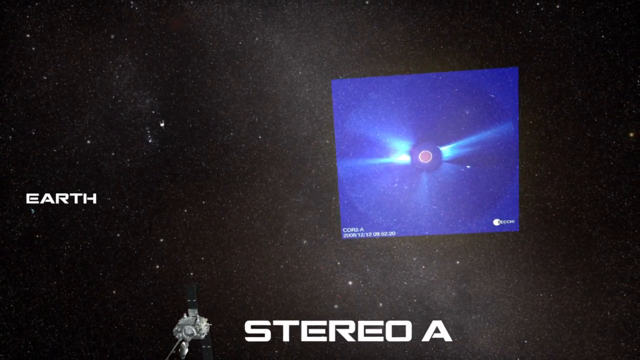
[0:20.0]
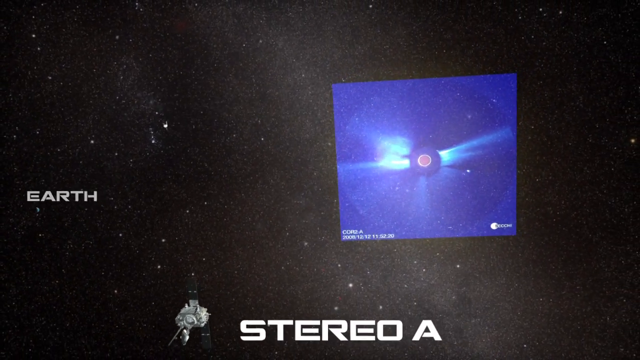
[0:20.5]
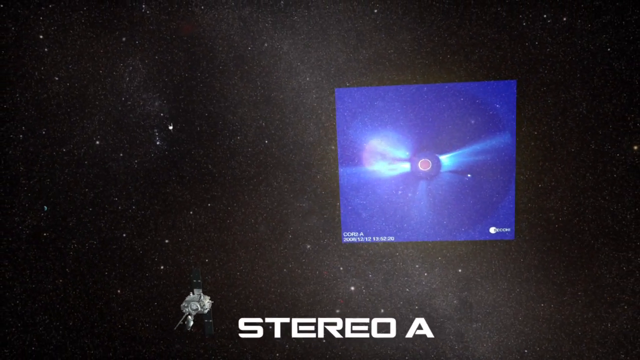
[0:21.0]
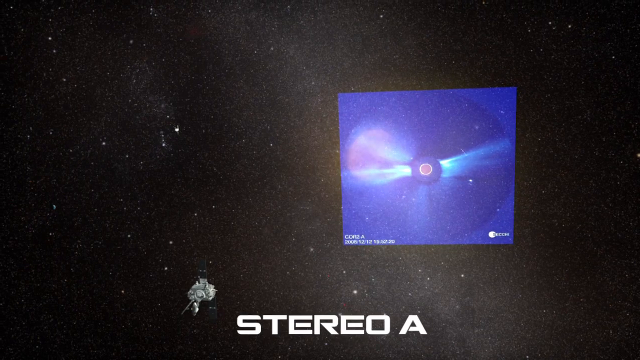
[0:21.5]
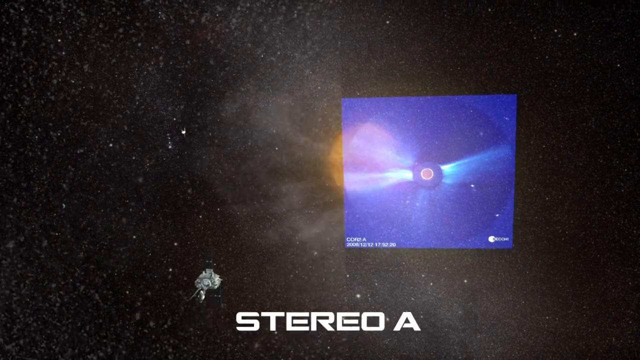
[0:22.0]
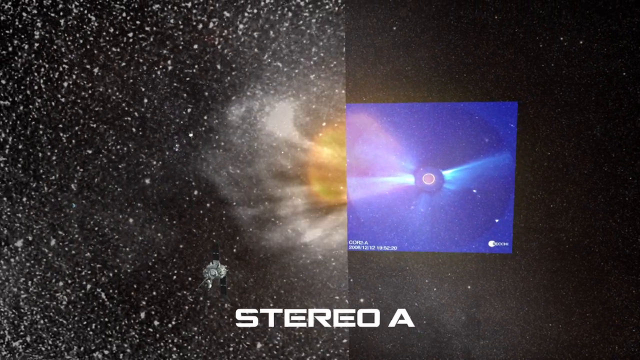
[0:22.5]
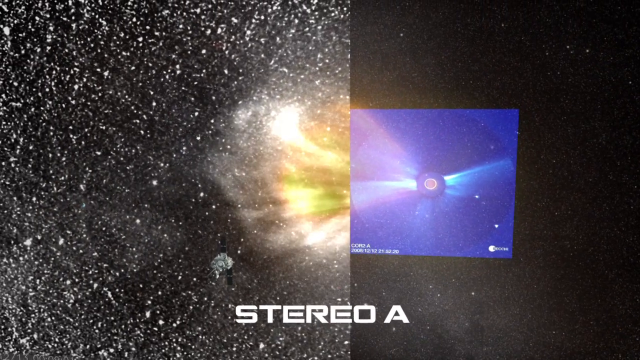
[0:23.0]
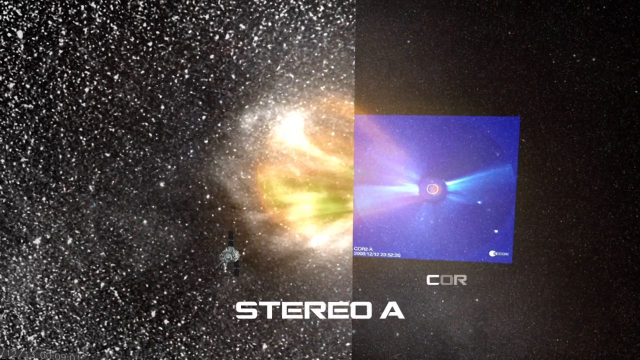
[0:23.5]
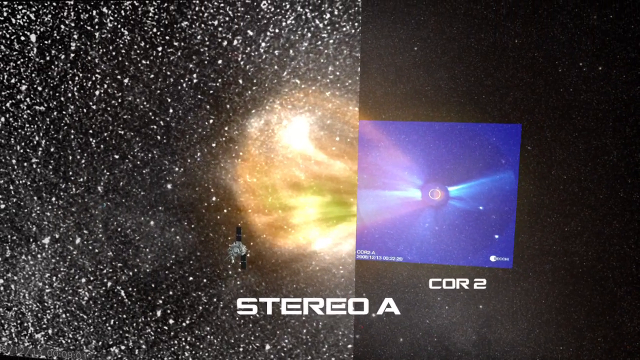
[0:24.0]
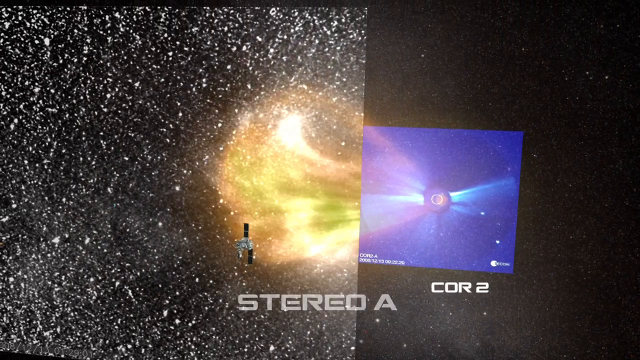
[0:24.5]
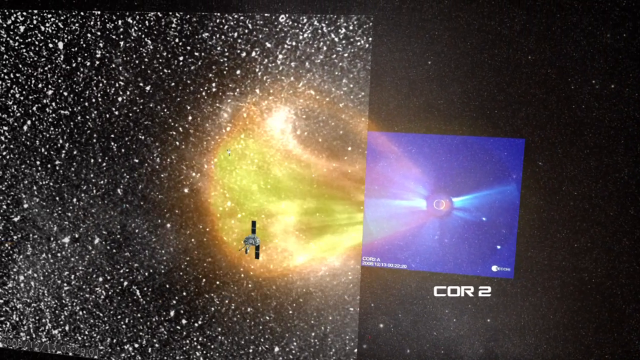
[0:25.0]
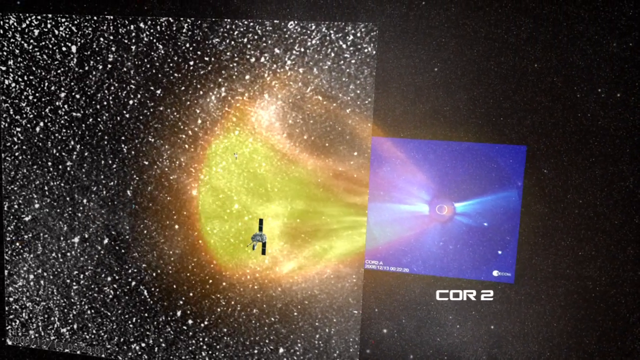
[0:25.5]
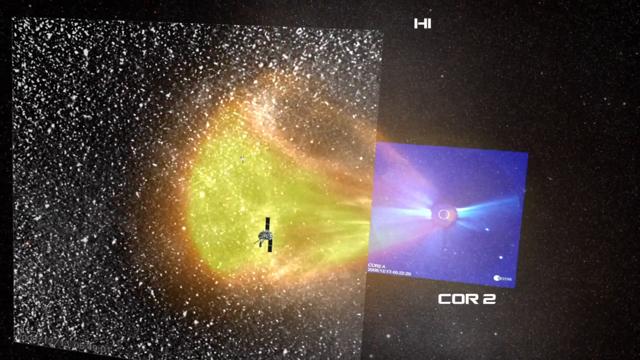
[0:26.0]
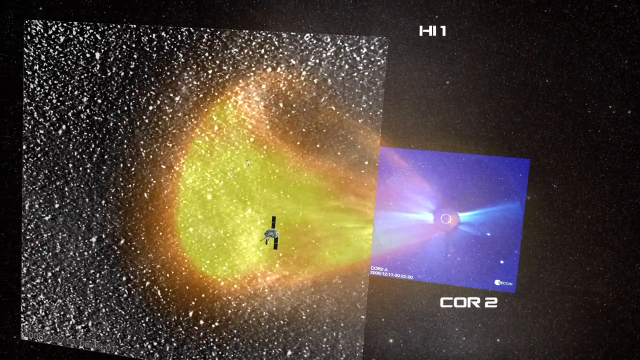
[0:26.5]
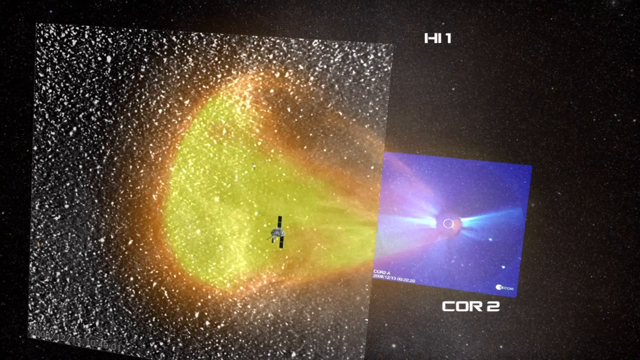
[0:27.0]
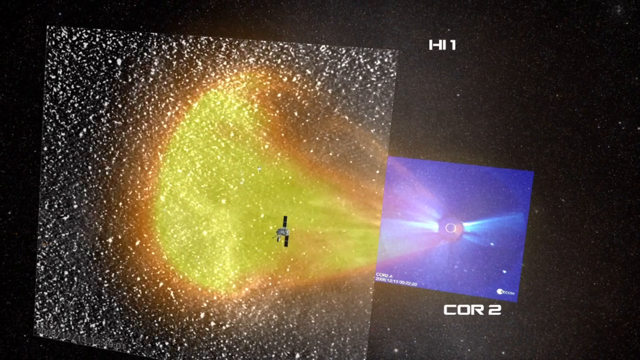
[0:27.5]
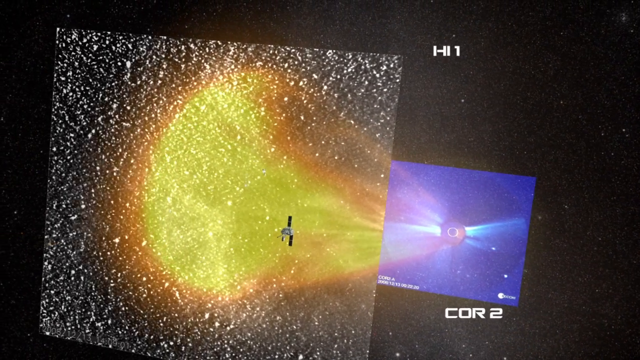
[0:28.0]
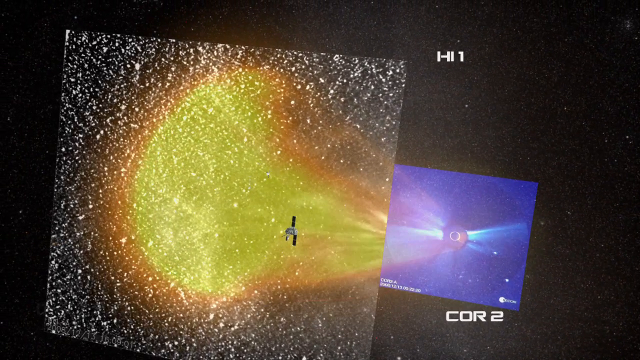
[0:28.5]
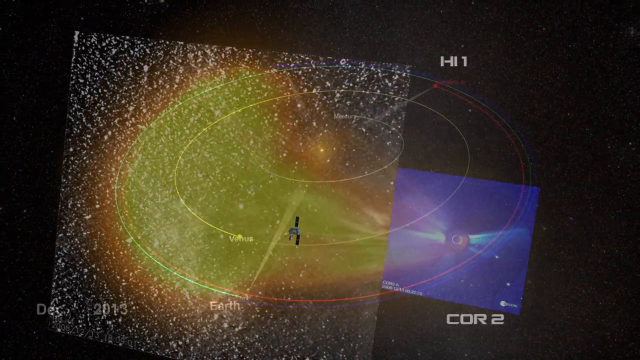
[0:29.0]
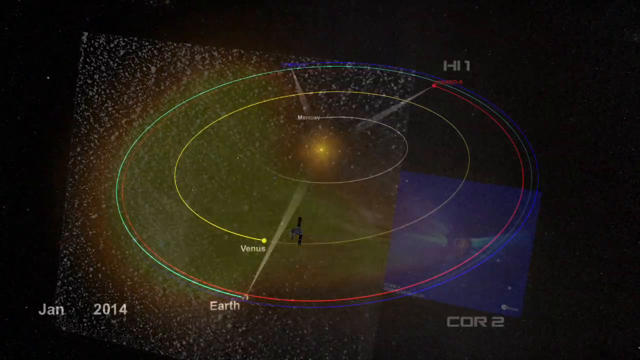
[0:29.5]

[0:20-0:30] A 3D rendering of space shows an orange sun in the distance surrounded by a blue transparent screen, set against a space background with various white dots representing stars and planets. Two labels are on the screen: on the left a planet labeled "Earth," and at the bottom center a satellite labeled "Stereo A." The screen is labeled "COR2." The screen then splits in half: the left half shows various close white dots and large sunbeams coming through the screen, while the right half remains the same. A new white label reading "HI1" appears at the top right. This screen slowly fades out to show a 3D model of the whole solar system with the sun in the center and multiple lined circles along which planets orbit the sun.